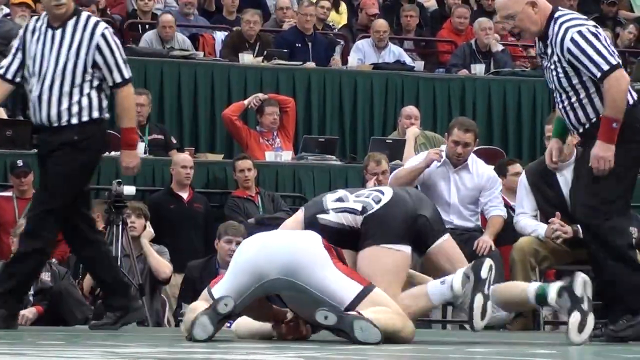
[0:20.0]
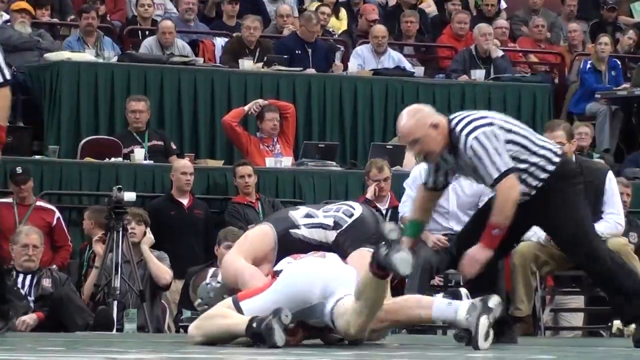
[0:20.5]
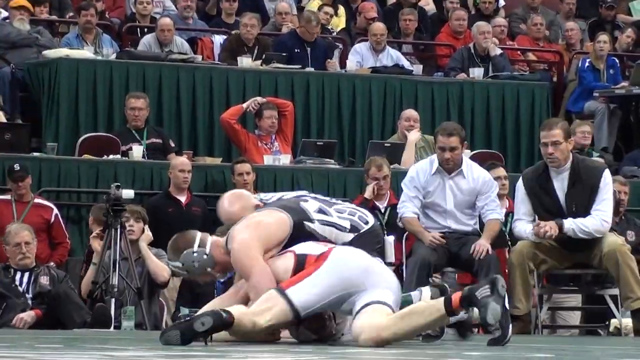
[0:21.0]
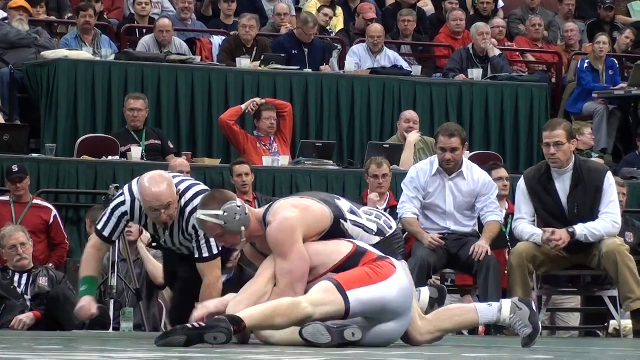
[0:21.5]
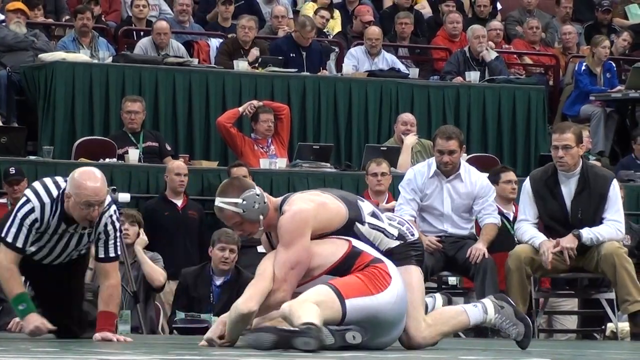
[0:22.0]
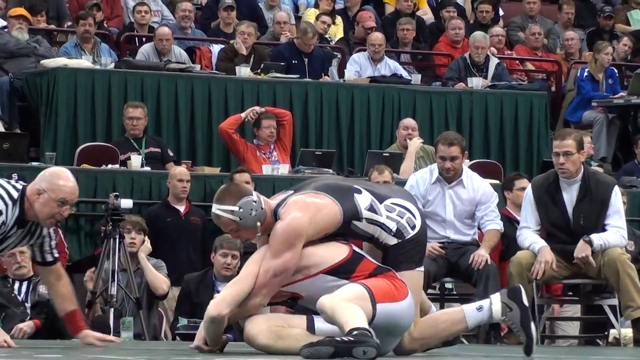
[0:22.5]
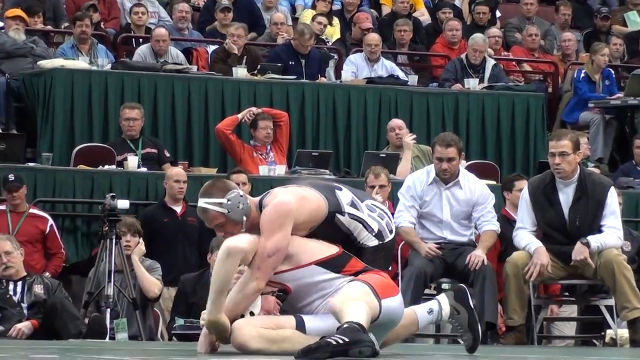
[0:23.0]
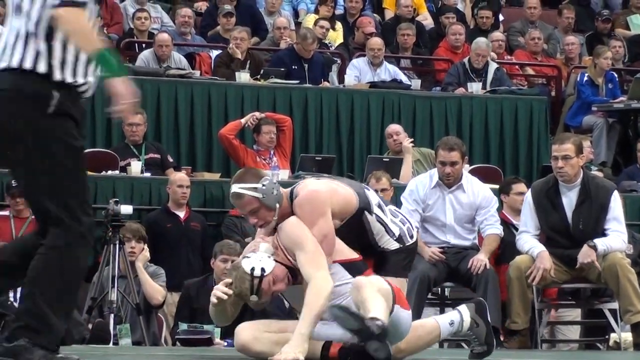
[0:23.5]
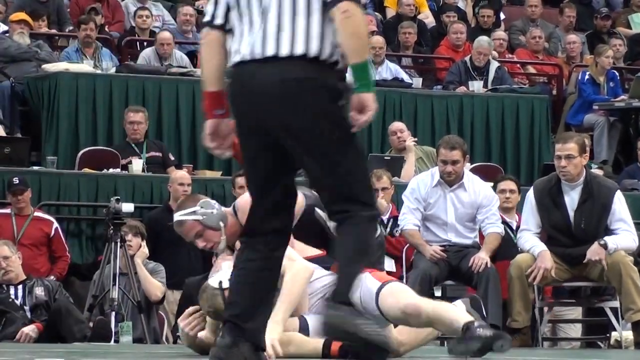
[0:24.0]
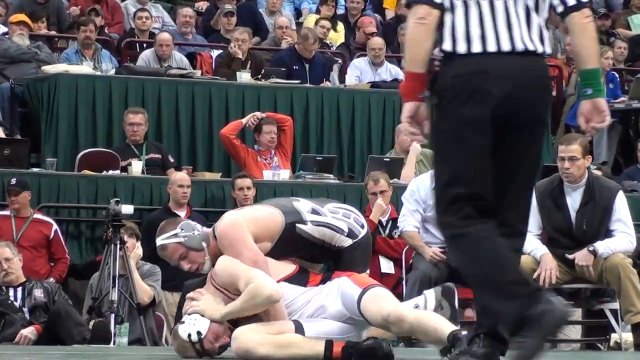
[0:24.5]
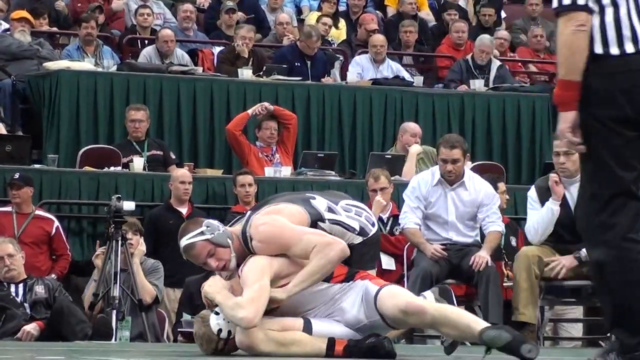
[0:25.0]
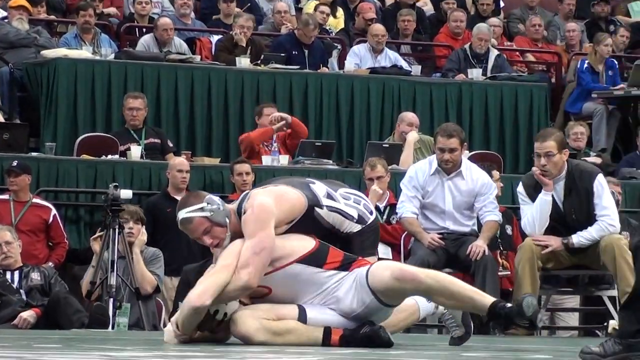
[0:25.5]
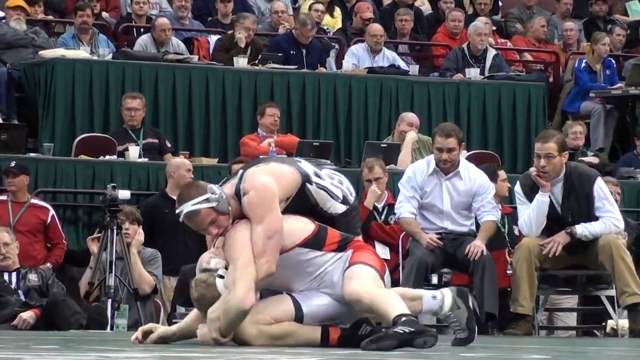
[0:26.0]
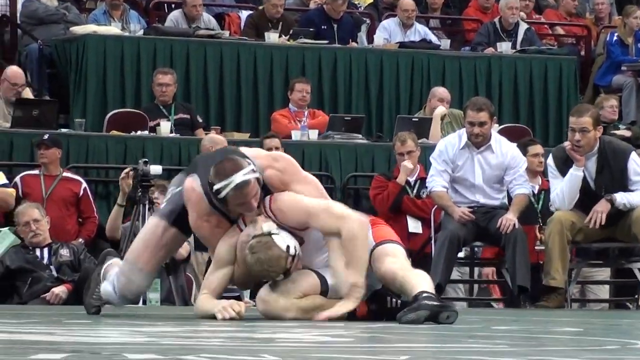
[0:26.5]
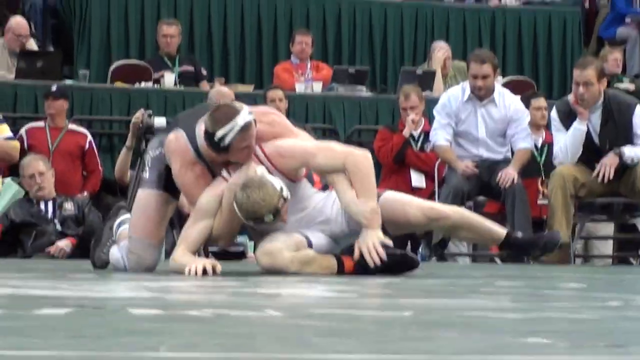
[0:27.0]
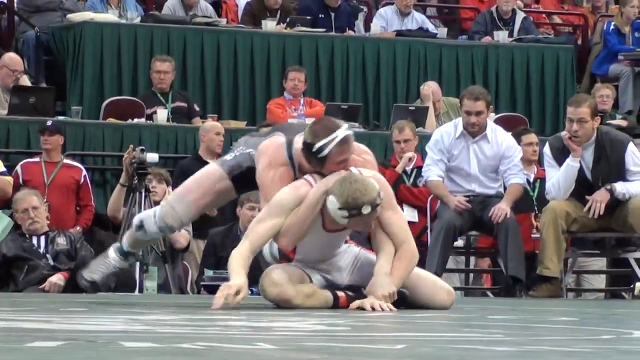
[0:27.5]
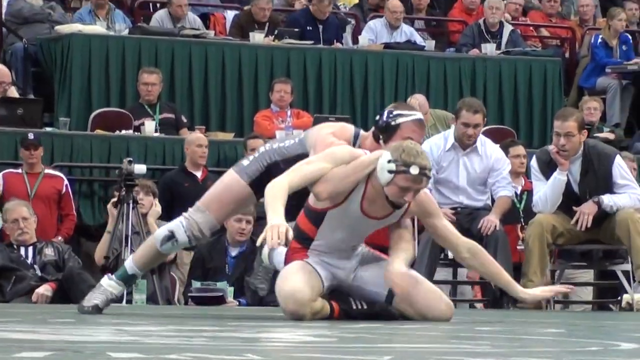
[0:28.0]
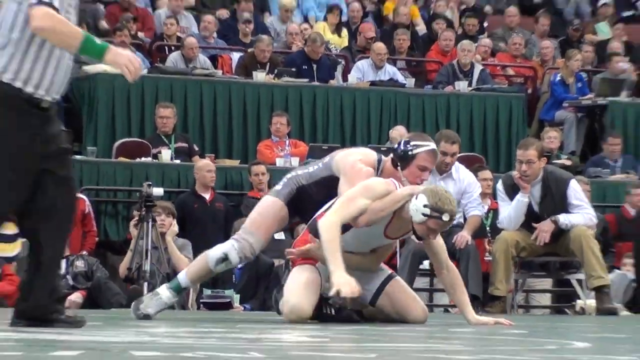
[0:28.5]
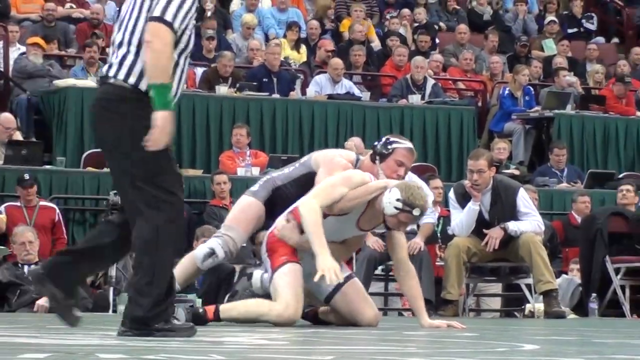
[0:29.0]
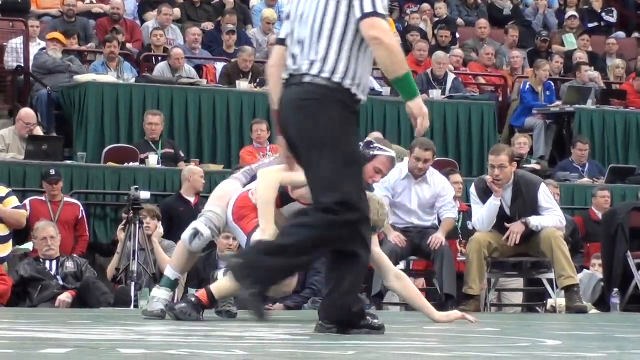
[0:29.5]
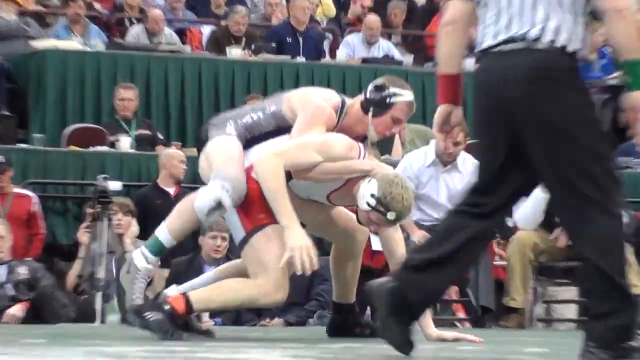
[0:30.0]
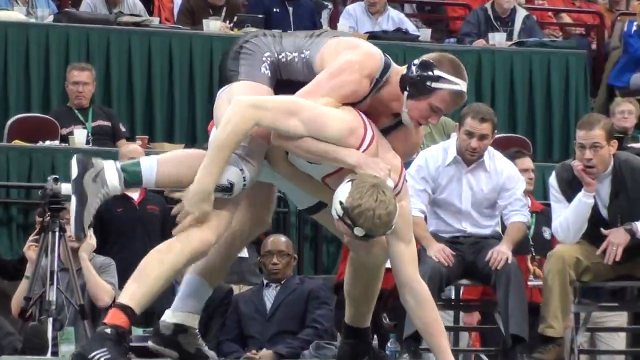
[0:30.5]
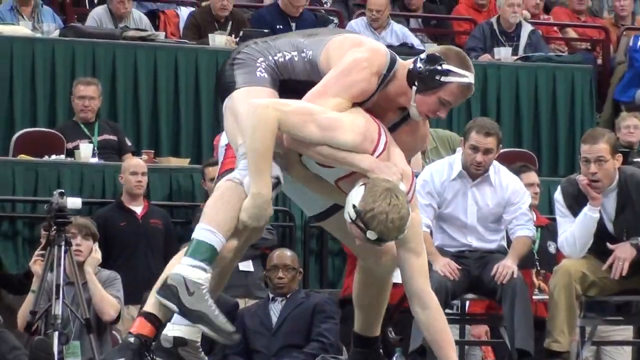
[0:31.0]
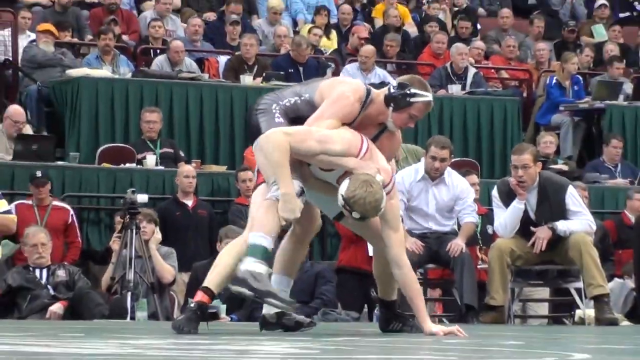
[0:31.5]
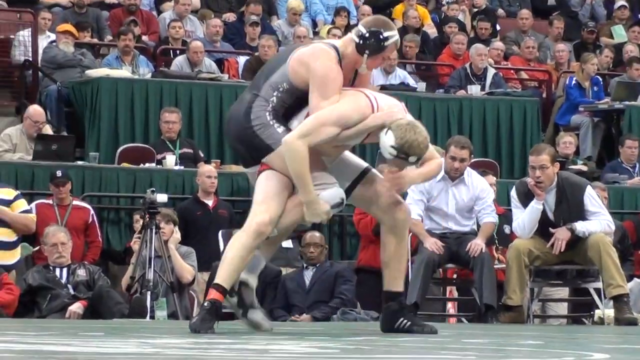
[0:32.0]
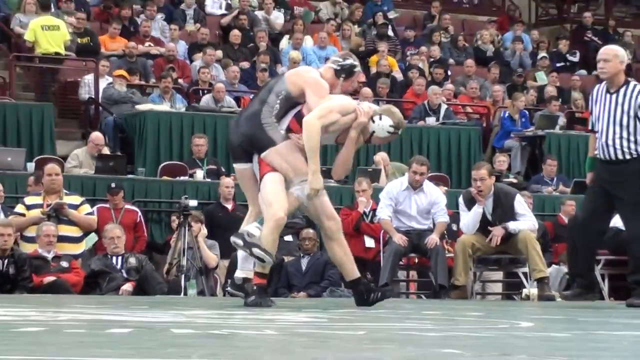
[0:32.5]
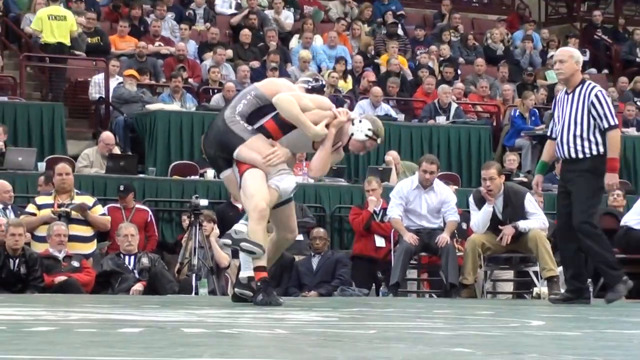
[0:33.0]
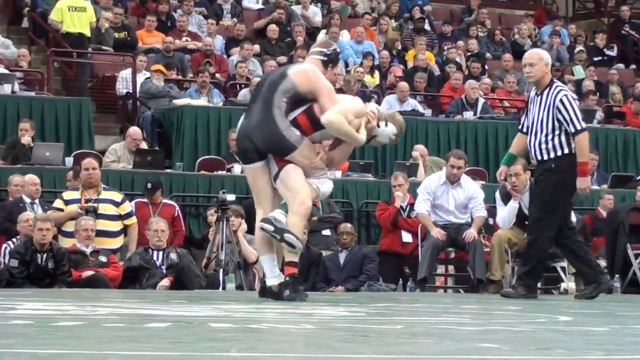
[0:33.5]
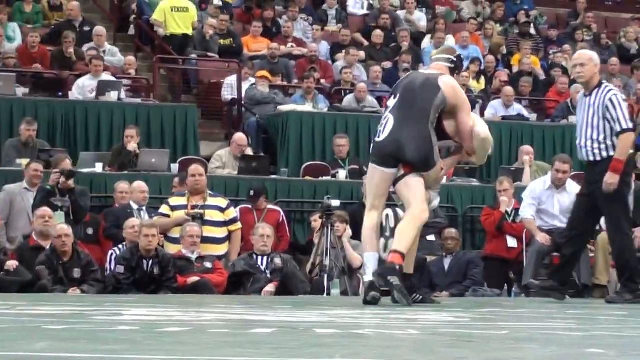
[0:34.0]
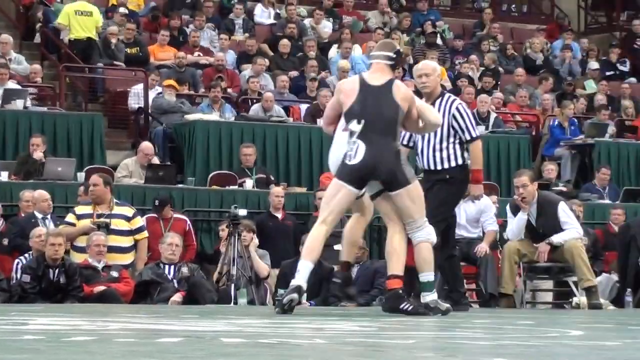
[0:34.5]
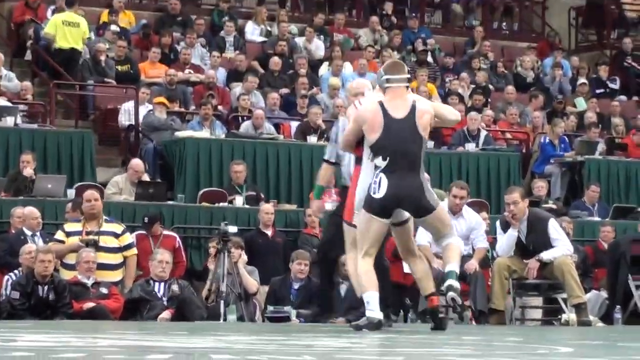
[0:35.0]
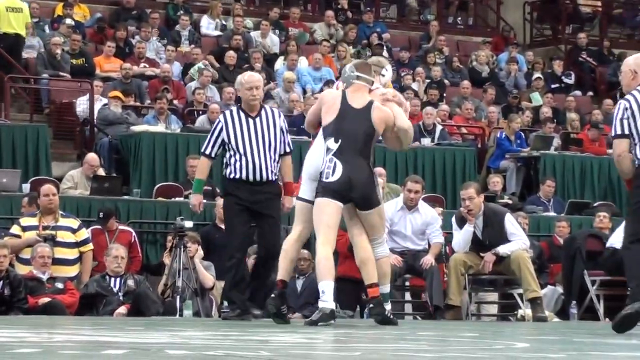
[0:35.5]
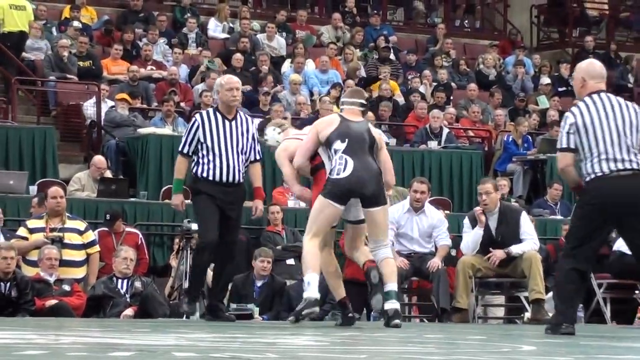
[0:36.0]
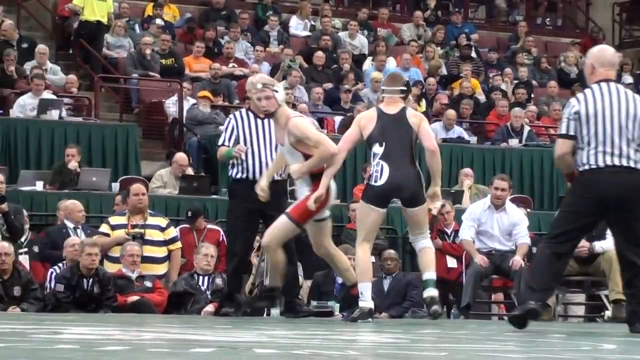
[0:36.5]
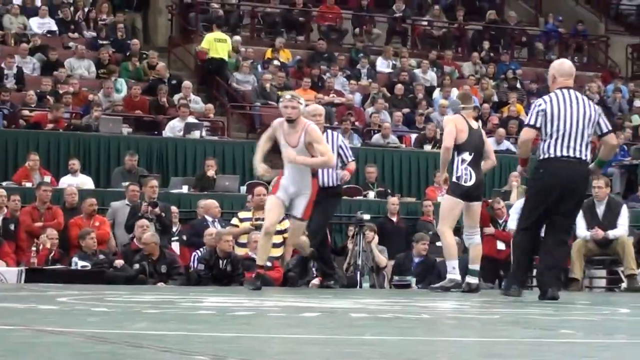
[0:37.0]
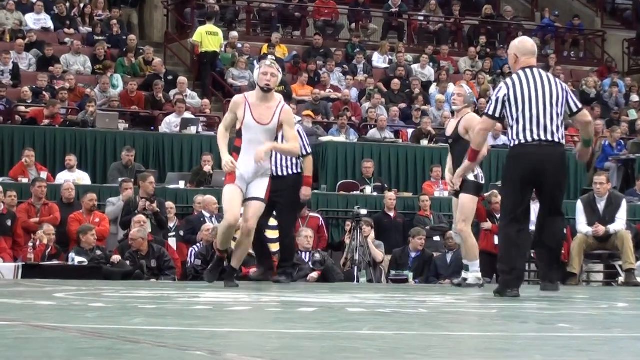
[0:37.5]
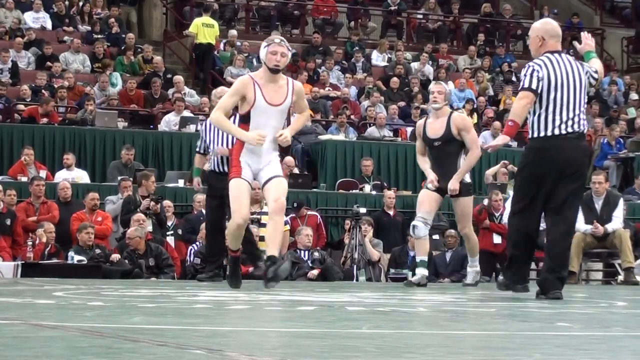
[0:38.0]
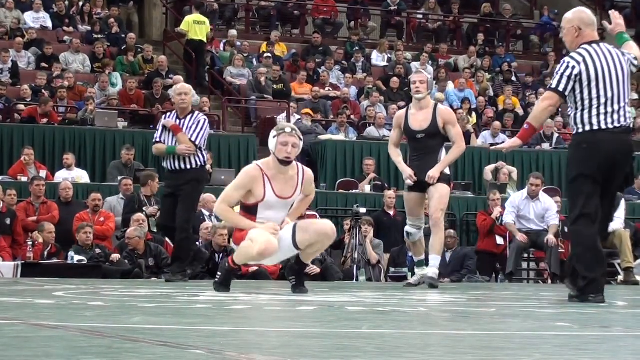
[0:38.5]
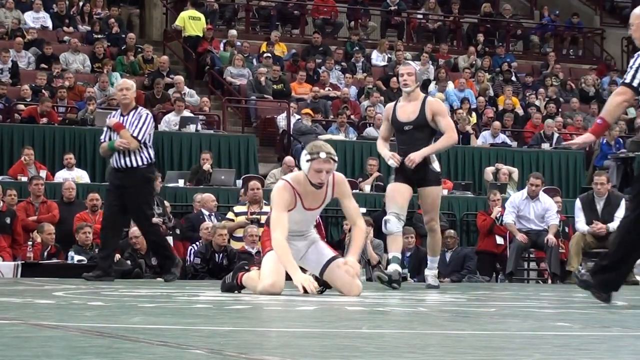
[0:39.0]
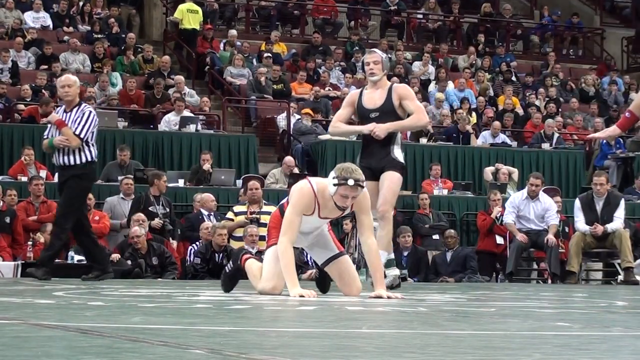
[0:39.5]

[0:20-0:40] Right after the takedown attempt, the wrestler in white is on all fours in the down position, his back toward the camera, head lowered and arms planted. The wrestler in black takes the top position, gripping him from behind. As the referee signals, the match resumes. The wrestler in white tries to explode forward, legs kicking back to shake off his opponent, but the wrestler in black reacts fast, staying on him and adjusting his grip mid-motion. They roll together, nearly going out of bounds, but the wrestler in black stays in control and gains the advantage, locking into his position. The referee quickly drops to the mat for a better view, then slams his palm down, apparently to award the win or perhaps a point; the wrestler in black looks like he has had successful control. The audience behind them shifts forward, watching intently.